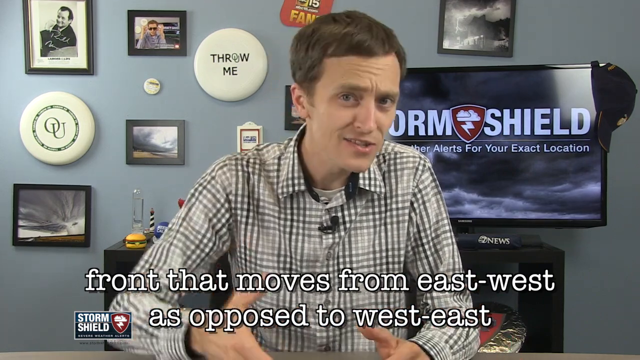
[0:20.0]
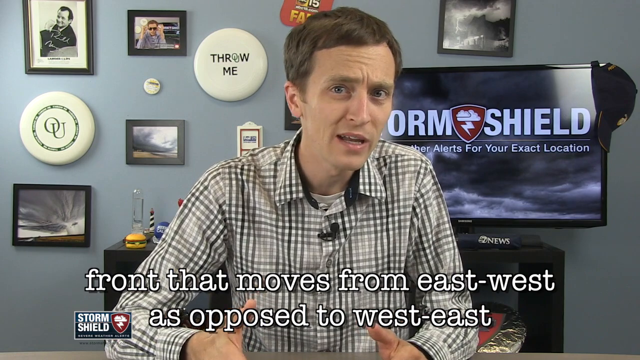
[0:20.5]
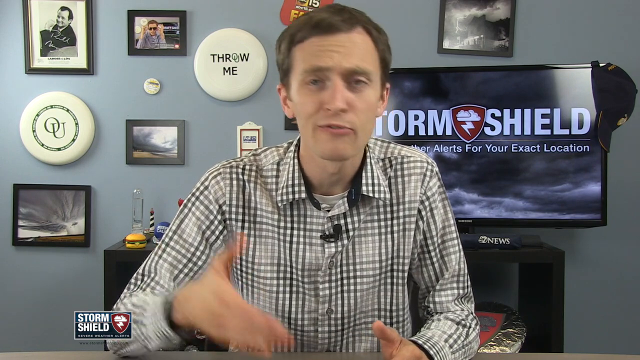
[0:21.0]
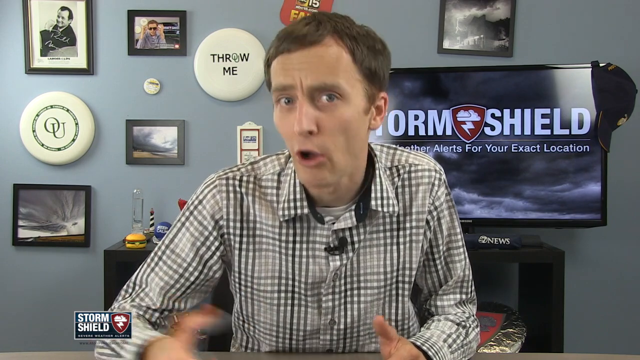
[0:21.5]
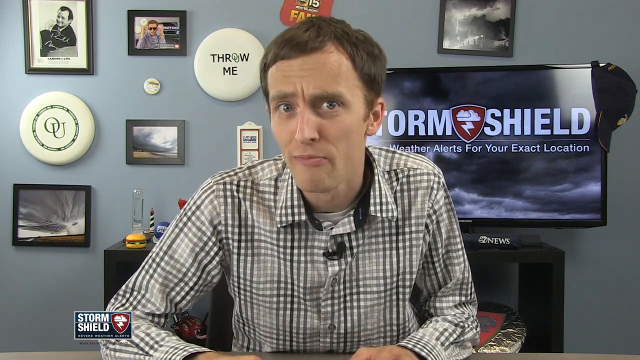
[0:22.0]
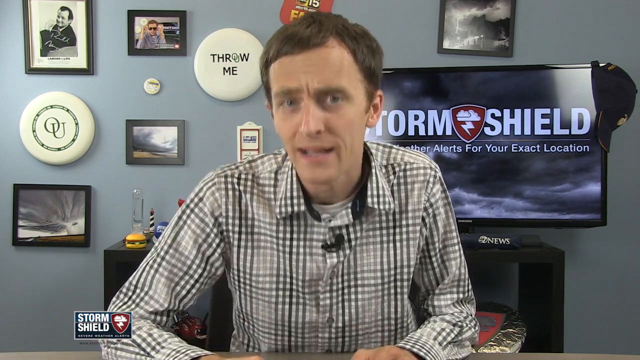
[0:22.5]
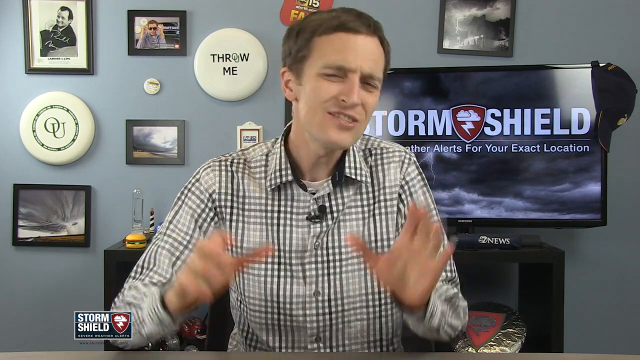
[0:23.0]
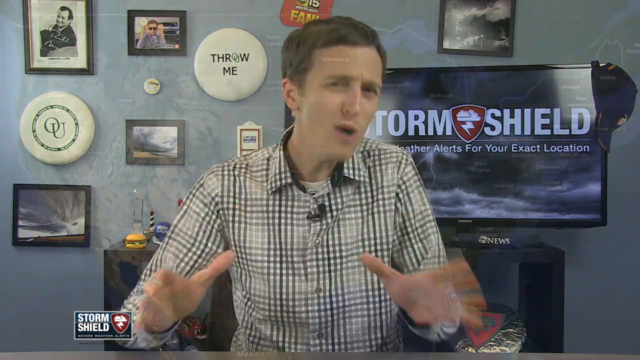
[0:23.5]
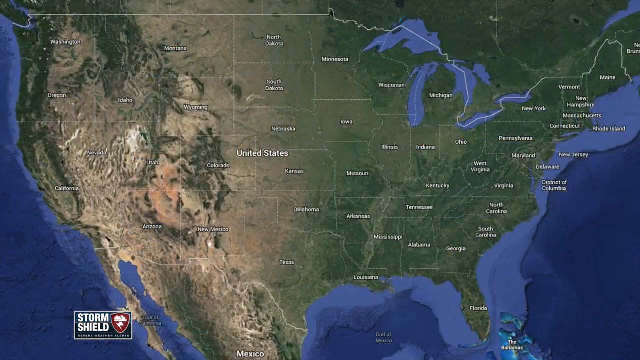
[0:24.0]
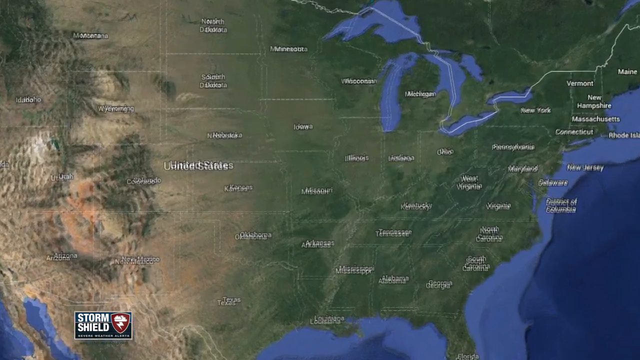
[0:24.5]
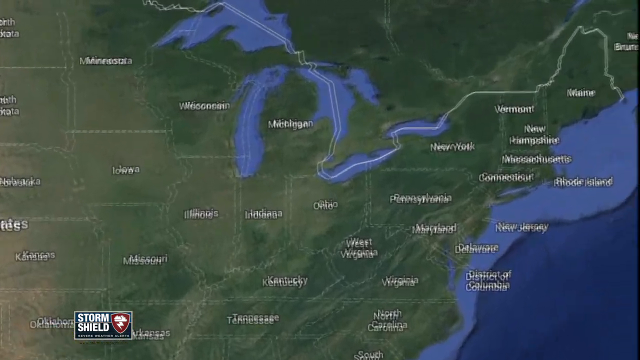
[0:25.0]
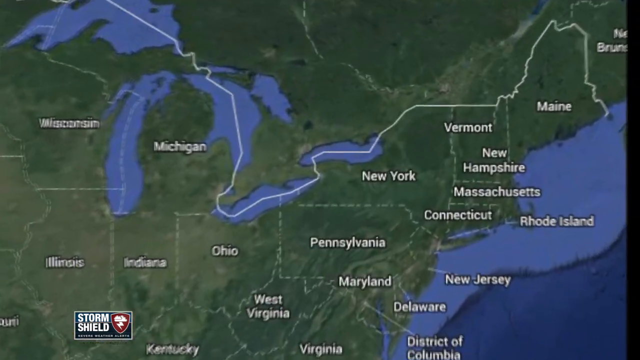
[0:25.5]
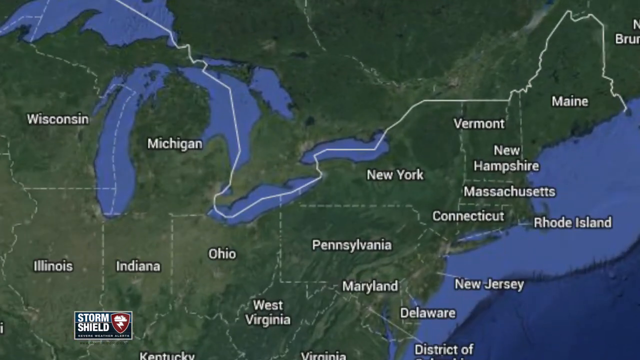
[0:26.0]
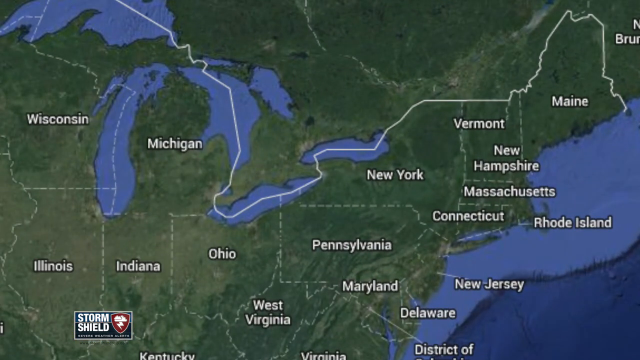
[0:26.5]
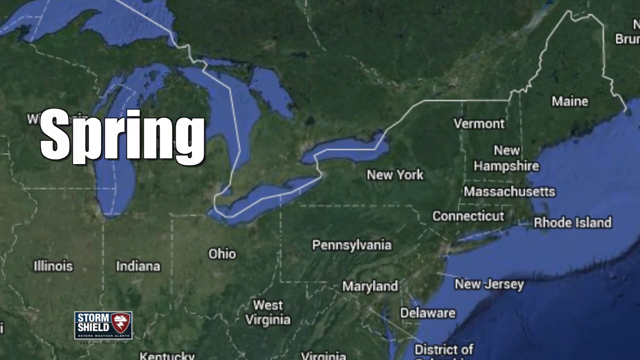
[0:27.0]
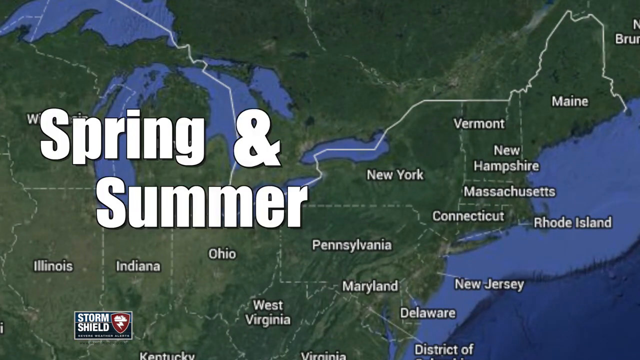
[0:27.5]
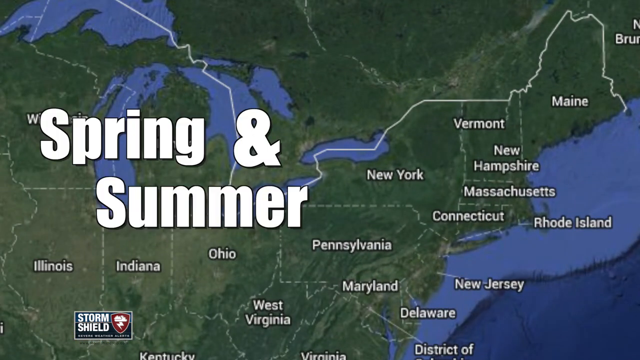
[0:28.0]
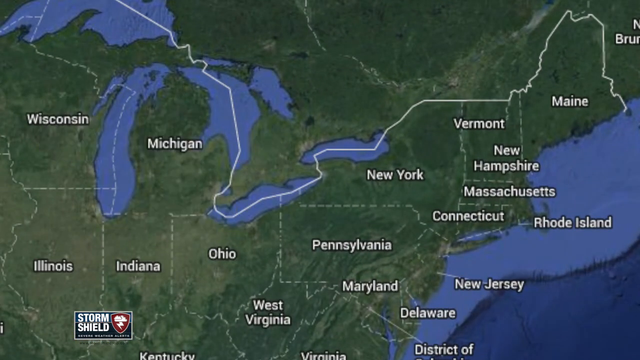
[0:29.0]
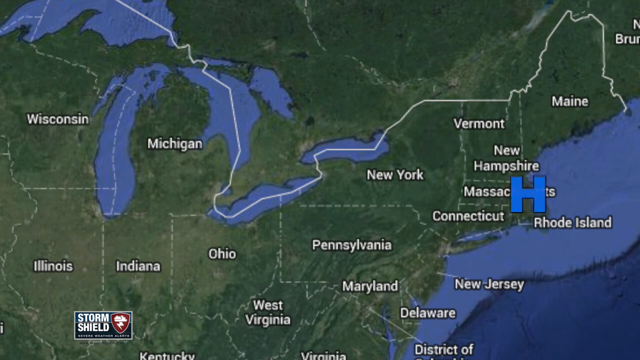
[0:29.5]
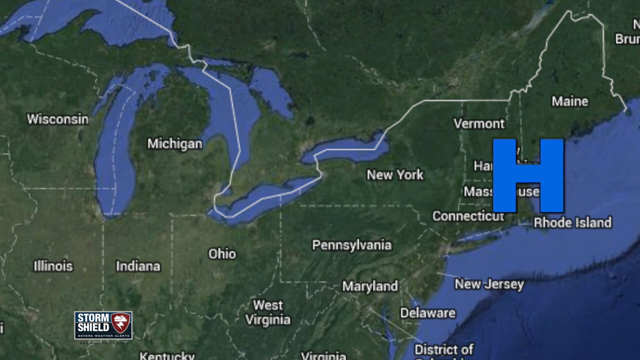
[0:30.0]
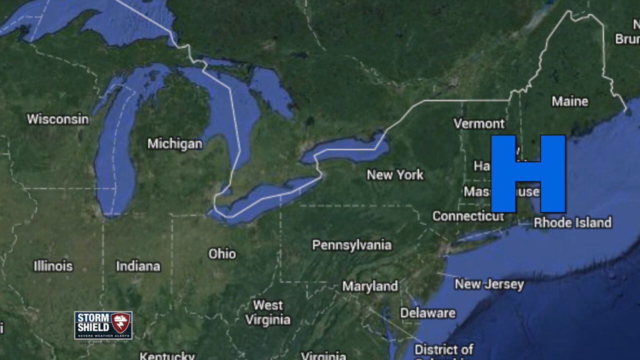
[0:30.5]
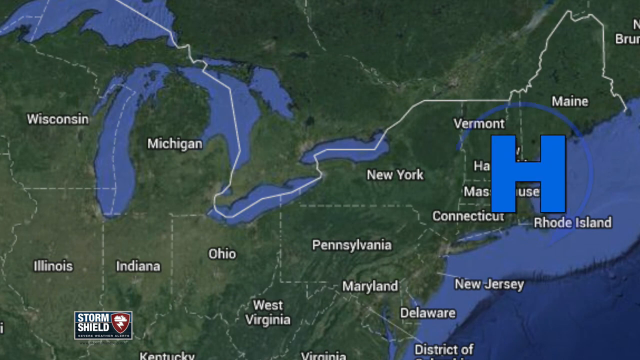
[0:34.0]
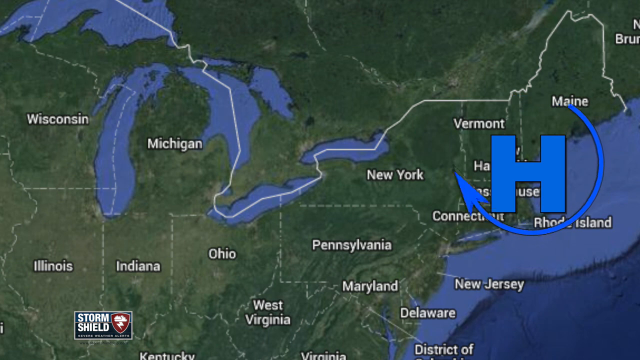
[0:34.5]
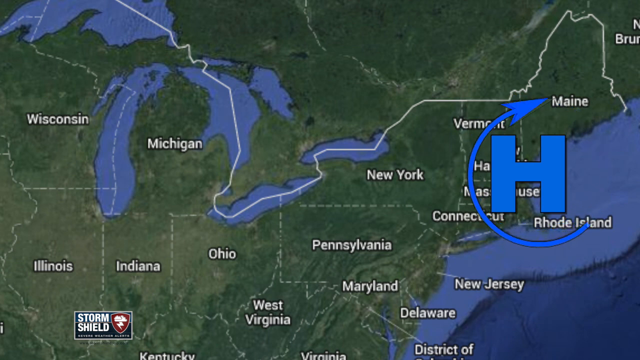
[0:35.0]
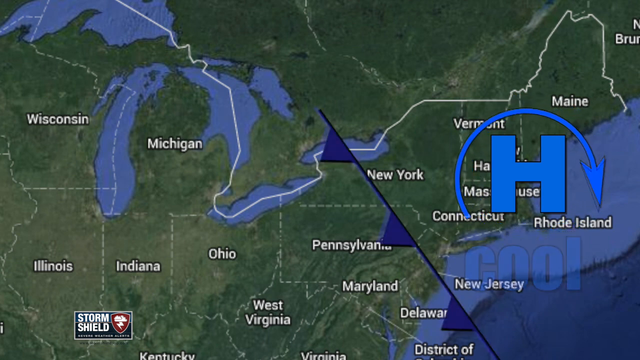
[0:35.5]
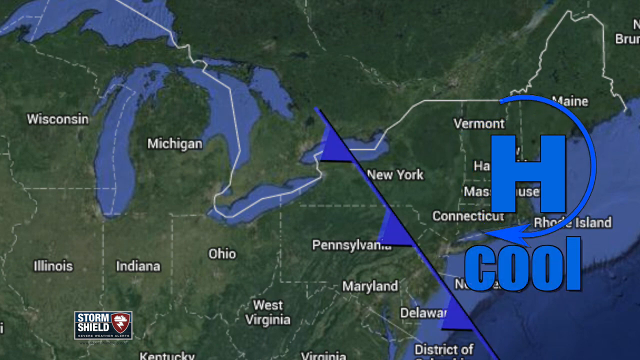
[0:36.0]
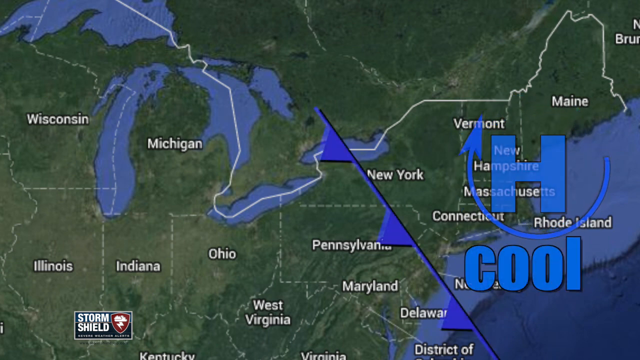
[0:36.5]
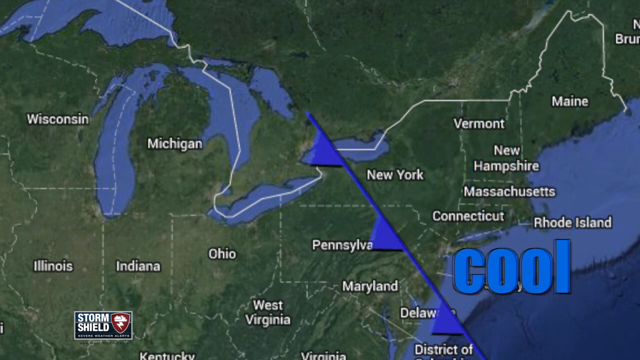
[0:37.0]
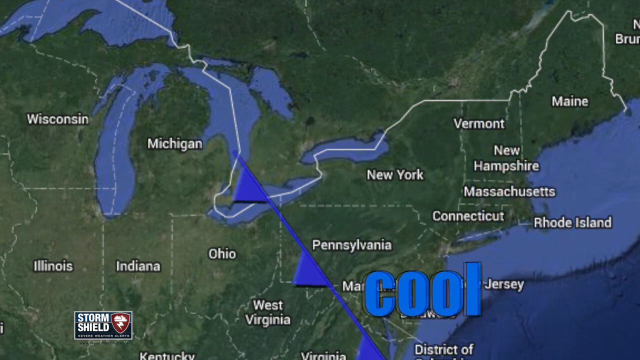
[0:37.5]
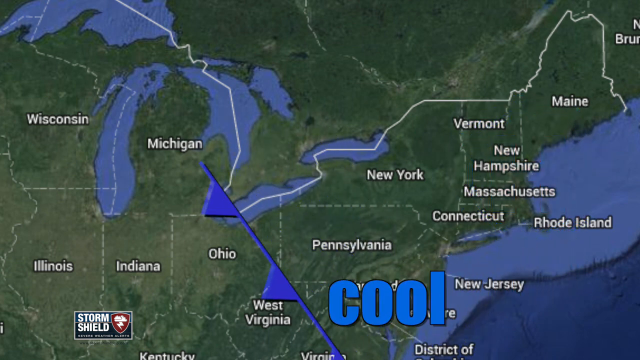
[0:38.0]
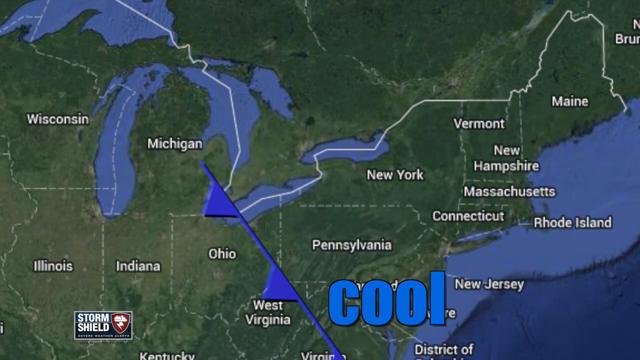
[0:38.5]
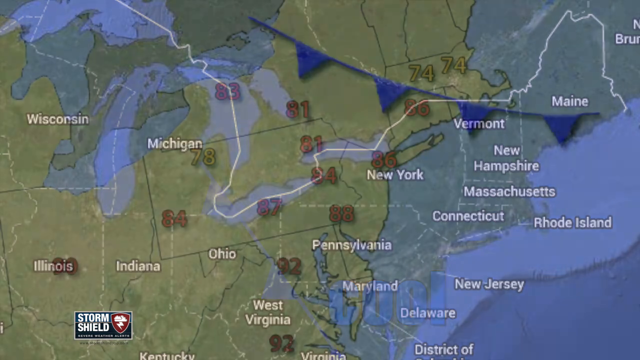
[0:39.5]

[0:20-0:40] Jason Myers, a storm shield meteorologist, speaks from what appears to be his home office. The text "front that moves from east to west as opposed to from west to east" is on the screen. A map of the United States then appears with the words "spring and summer." Up in the New England area, a blue H appears right across Massachusetts and Rhode Island. Something like a circular arrow appears and starts spinning around the capital H. A line appears, and right below the H the word "cool" appears in bold lowercase. The map changes color to kind of a tan.